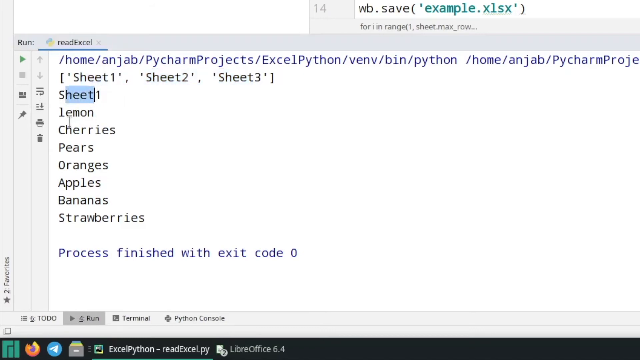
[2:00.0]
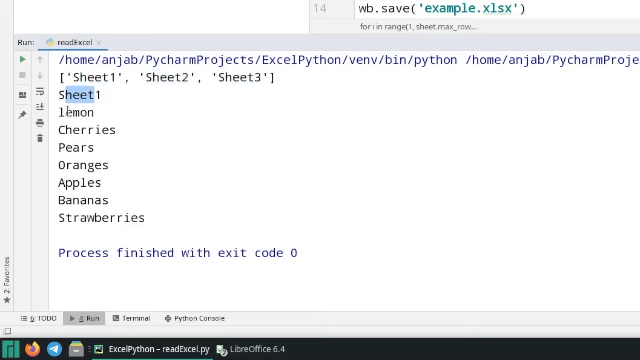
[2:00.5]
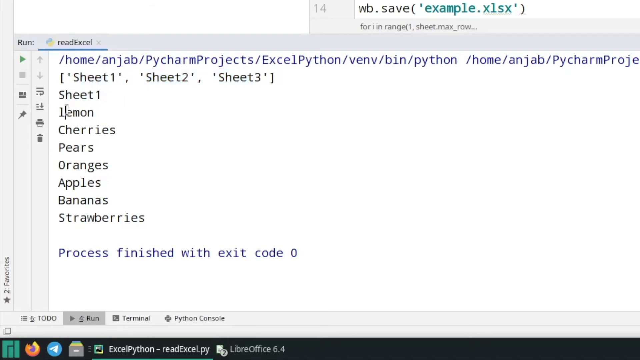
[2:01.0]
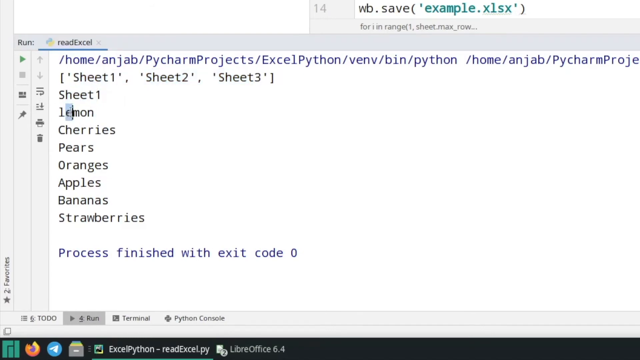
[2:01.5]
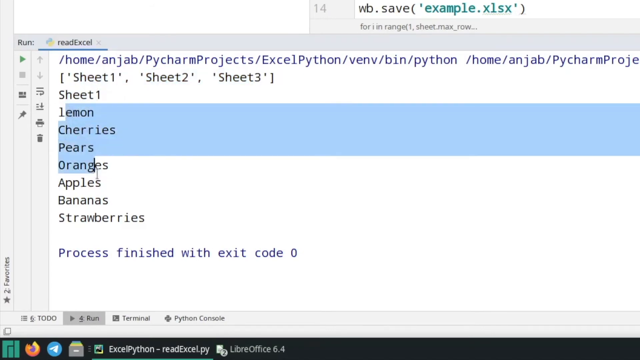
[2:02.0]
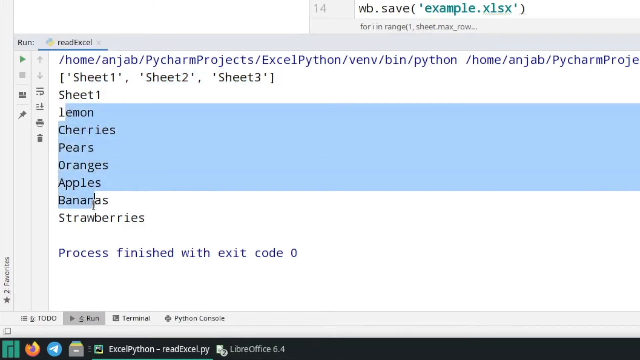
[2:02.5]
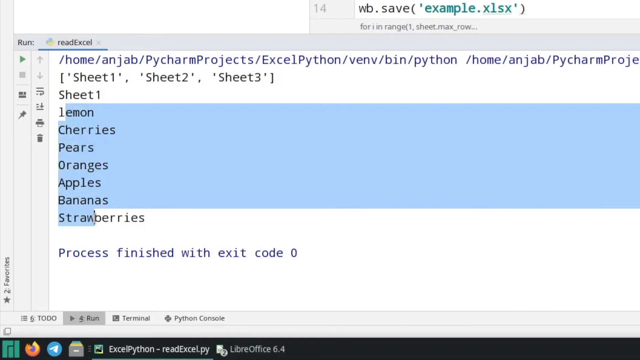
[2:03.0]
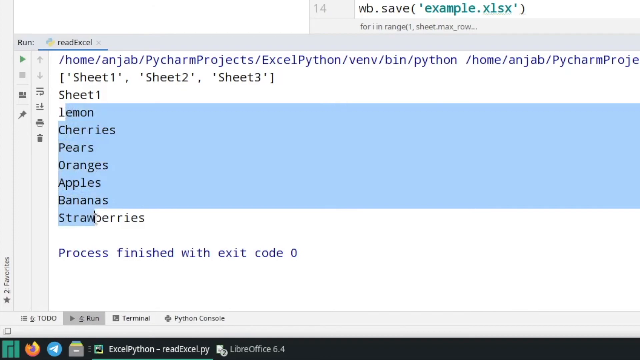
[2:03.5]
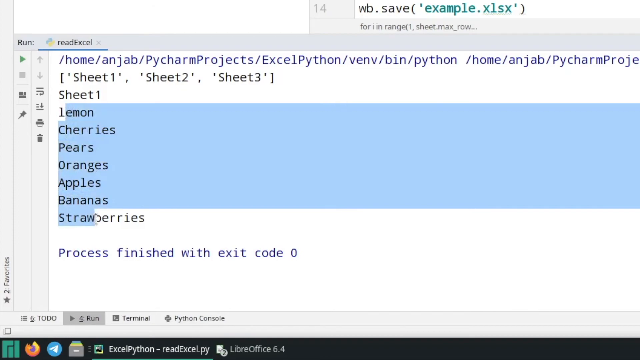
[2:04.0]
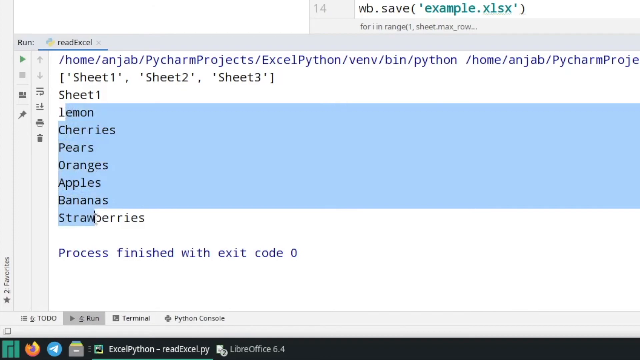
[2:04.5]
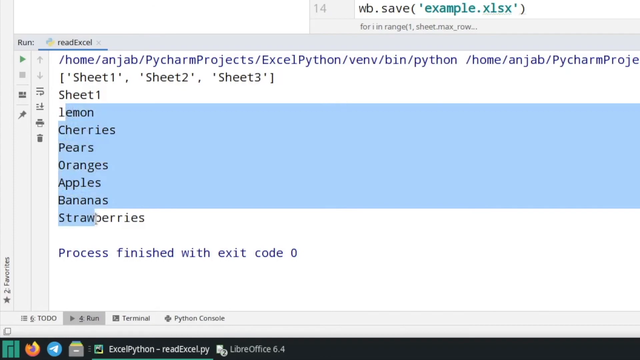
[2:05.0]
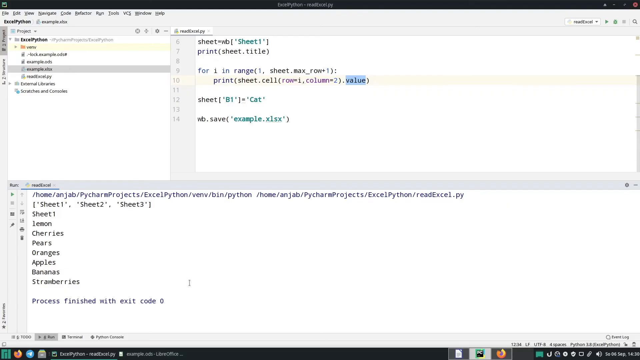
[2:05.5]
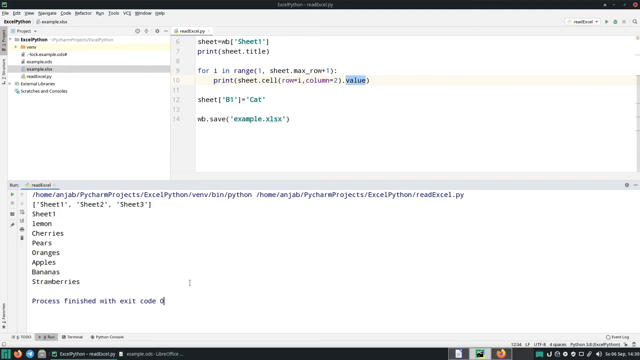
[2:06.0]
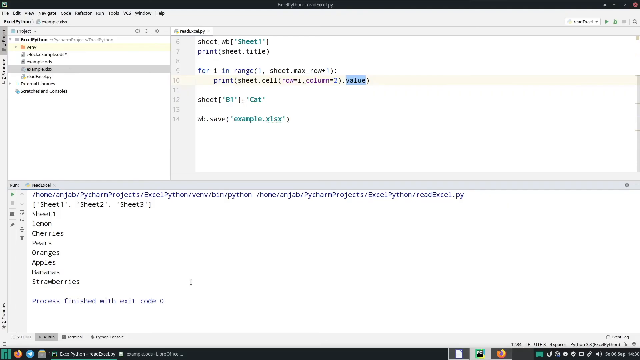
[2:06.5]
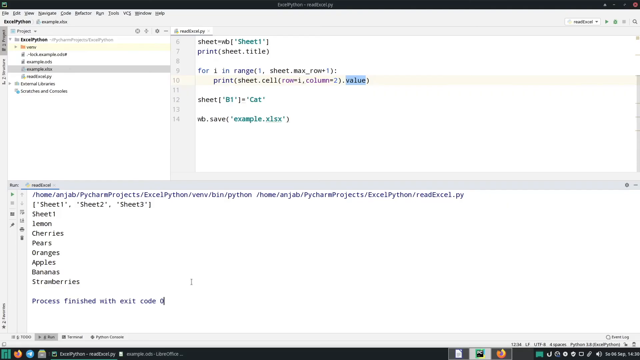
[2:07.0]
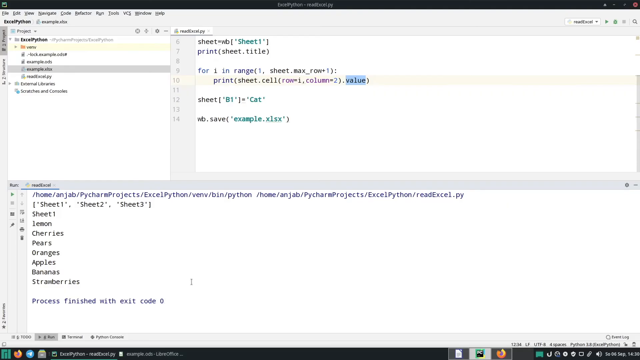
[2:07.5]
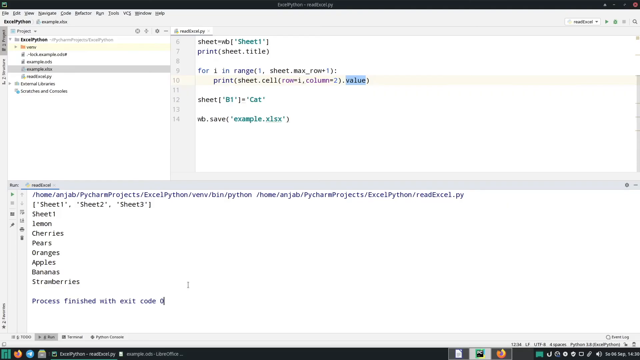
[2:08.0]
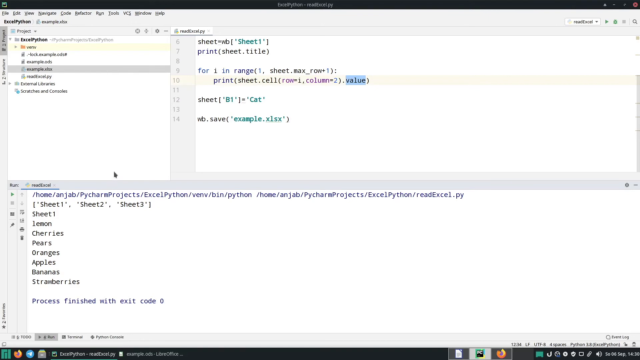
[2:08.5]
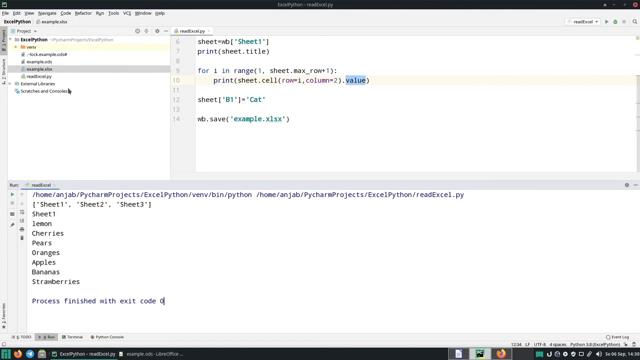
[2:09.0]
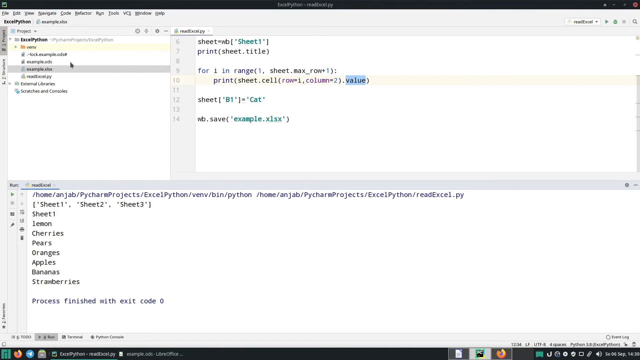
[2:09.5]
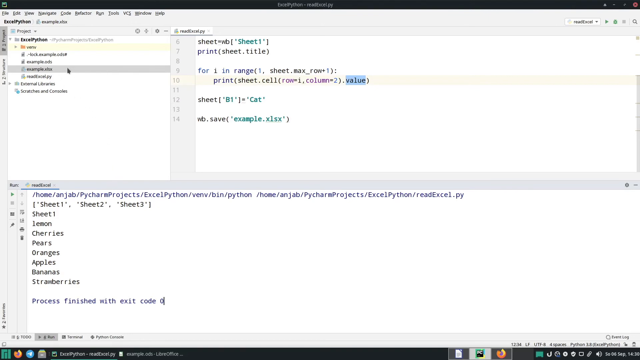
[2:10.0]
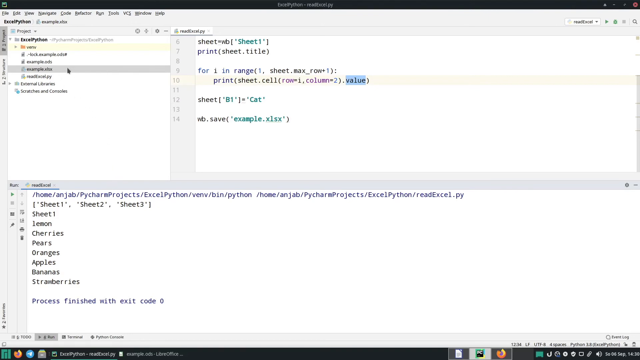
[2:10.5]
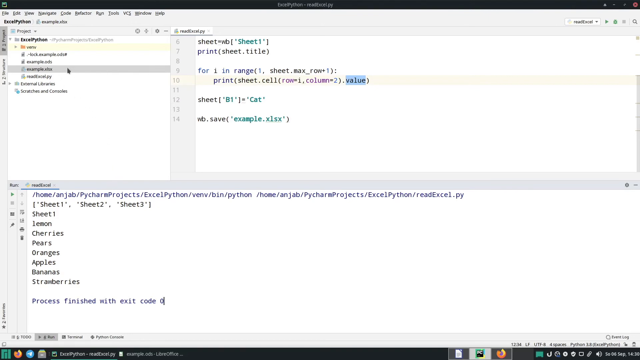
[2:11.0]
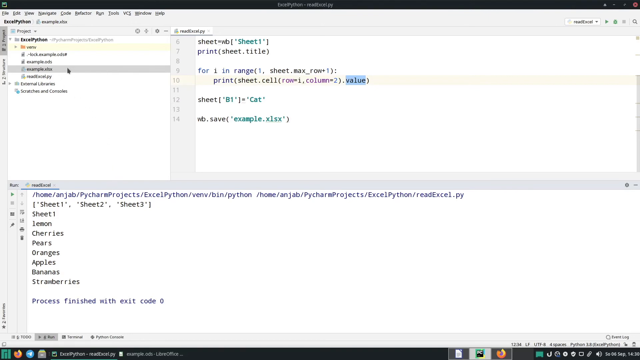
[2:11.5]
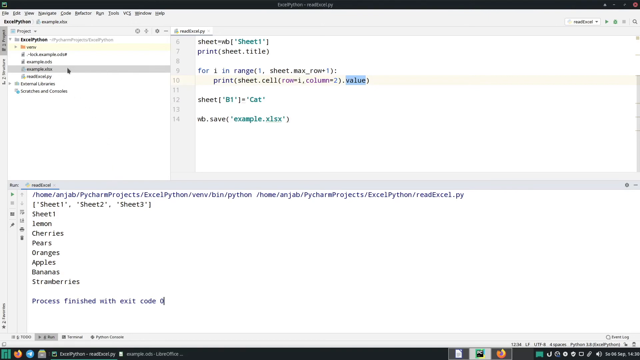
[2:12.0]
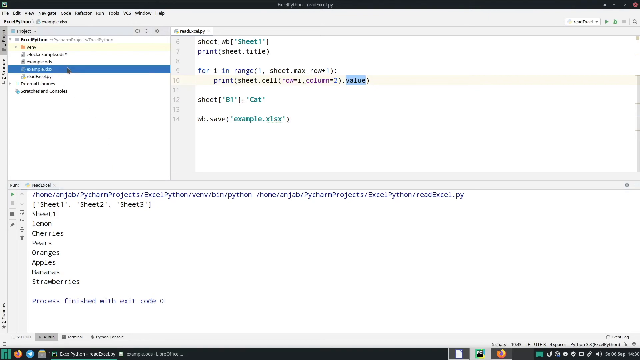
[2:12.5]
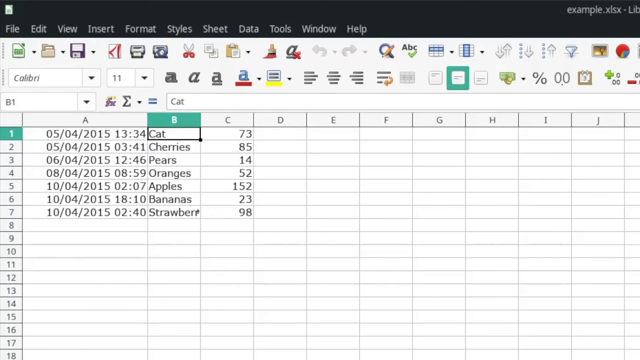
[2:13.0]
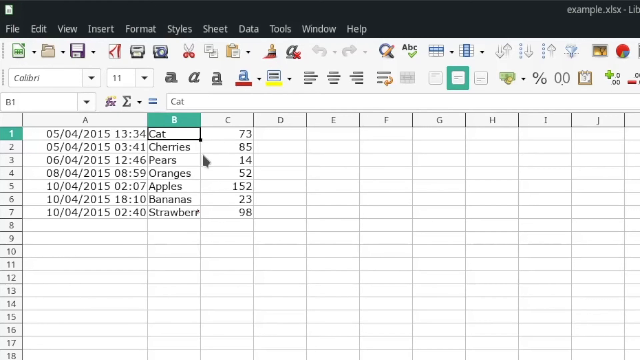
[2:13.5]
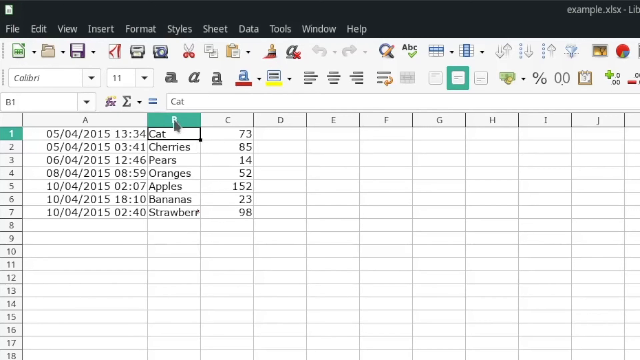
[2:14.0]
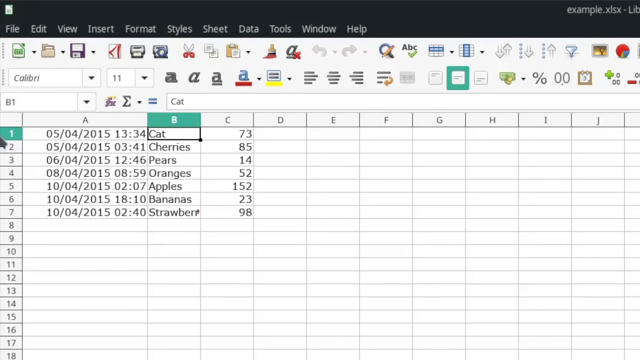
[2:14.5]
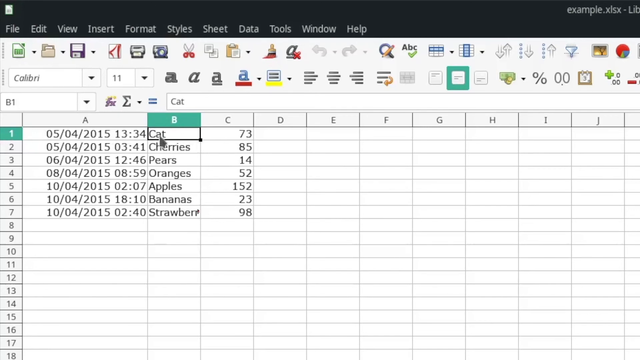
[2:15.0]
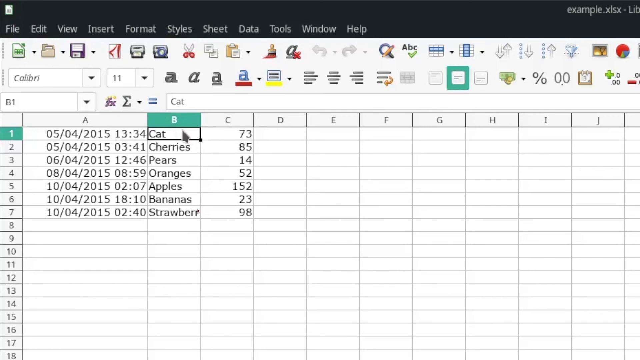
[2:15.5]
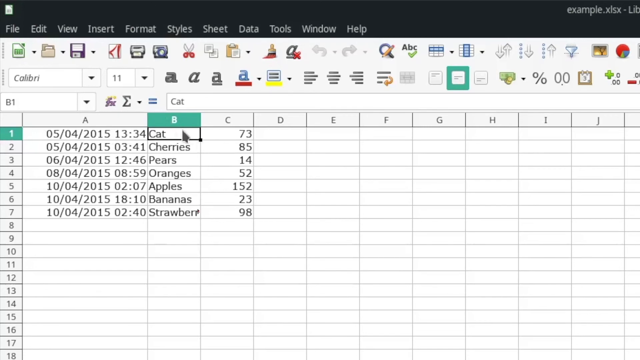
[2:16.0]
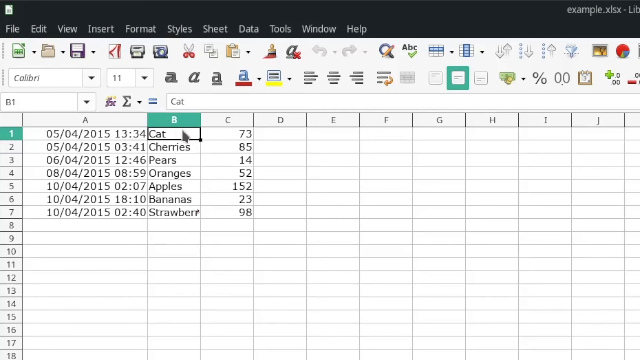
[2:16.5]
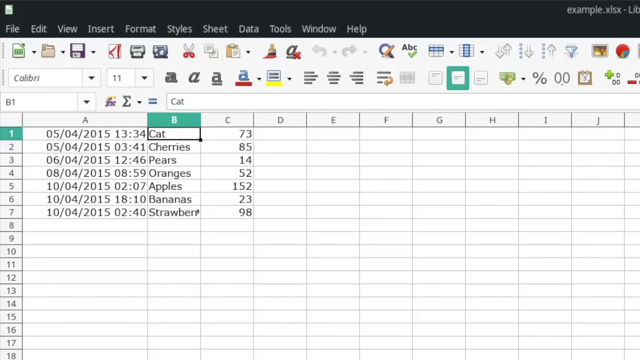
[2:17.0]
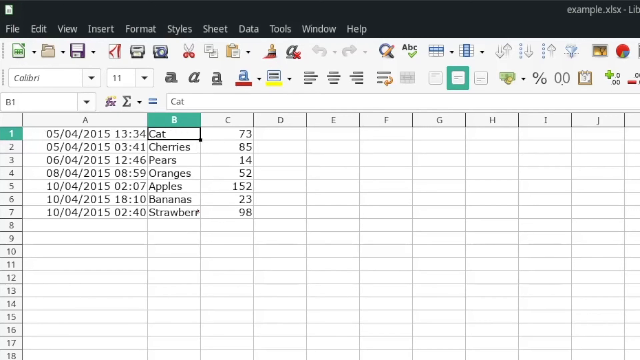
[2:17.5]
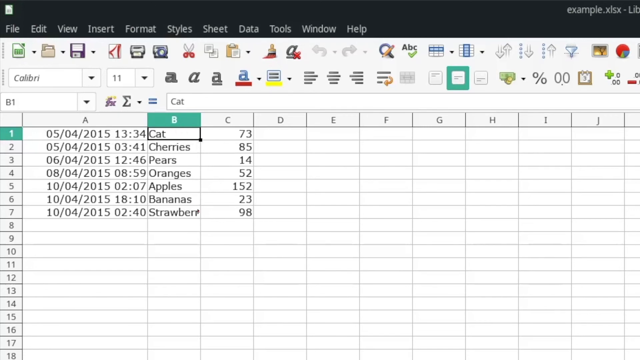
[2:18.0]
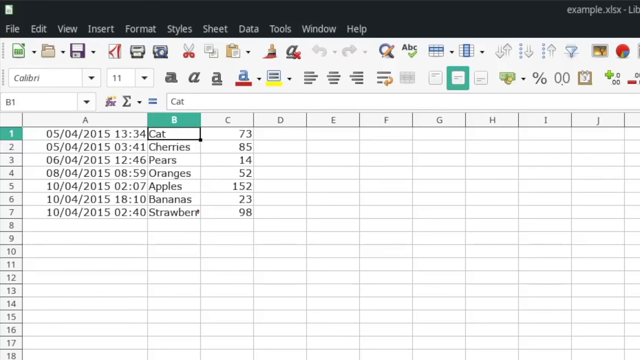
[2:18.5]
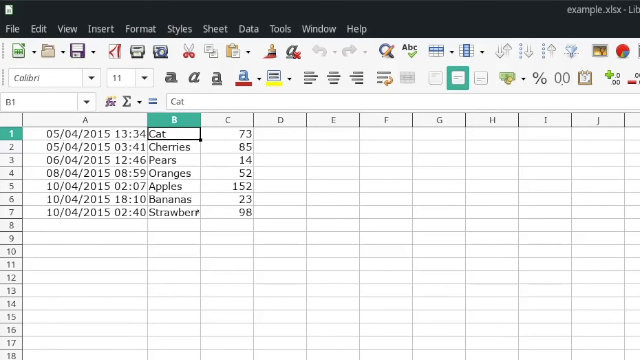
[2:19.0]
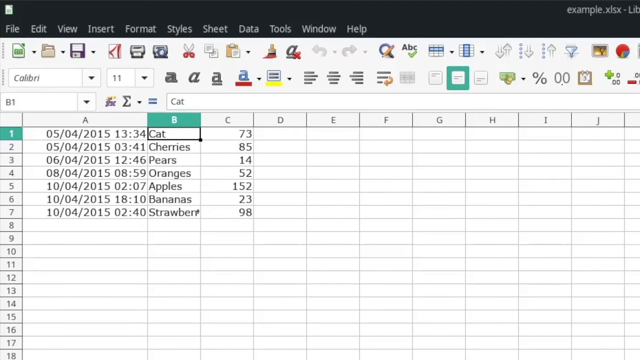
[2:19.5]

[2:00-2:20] A white computer screen has "Run XL" at the very top. Below it, the top line says "Home and Jeb, PyCharm Projects\xlpython\venvy\bin\python\home\and Jeb\PyCharm Projects." The next line says "sheet one sheet two sheet three," and below that "sheet one," followed by a list going down: "lemons," "cherries," "pears," "oranges," "apples," "bananas" and "strawberries." Underneath it says "process finished with exit code zero." The lines from "lemons" down to "strawberries" are then highlighted in light blue. The screen changes to show three separate smaller screens: a panel in the top left corner, another screen to its right, and one filling the whole bottom half of the screen, each containing different bits of code.